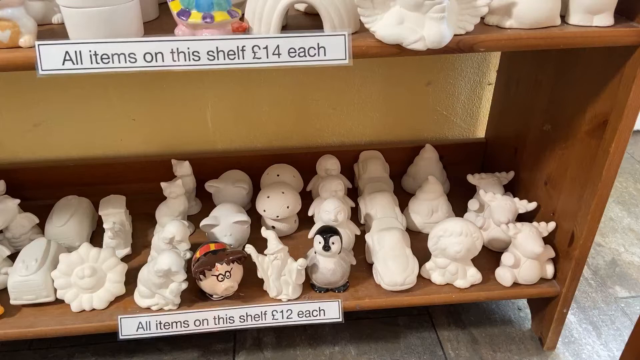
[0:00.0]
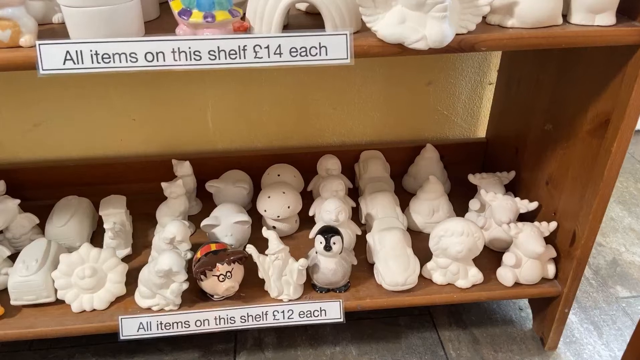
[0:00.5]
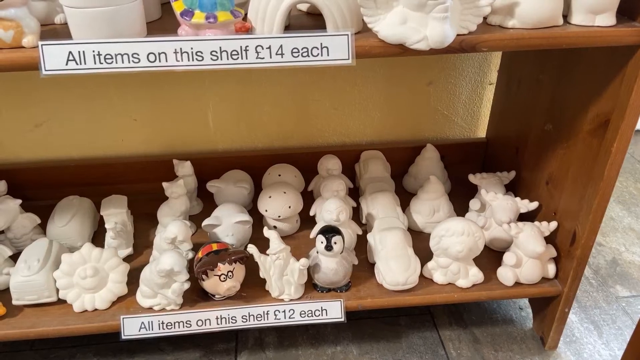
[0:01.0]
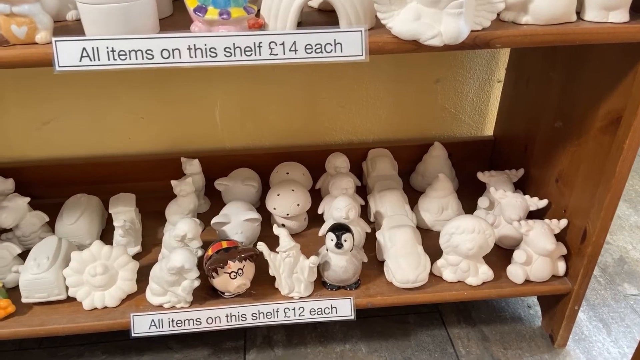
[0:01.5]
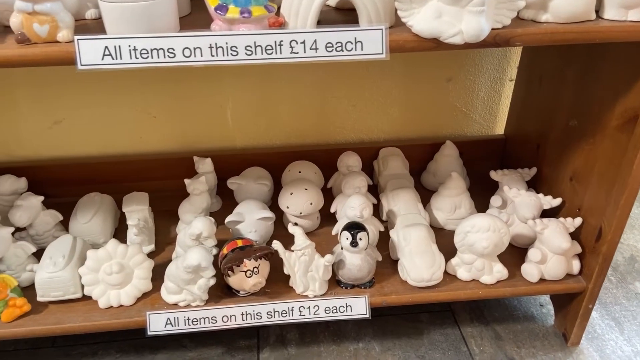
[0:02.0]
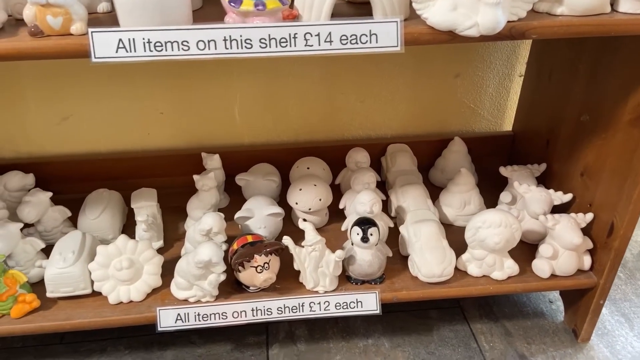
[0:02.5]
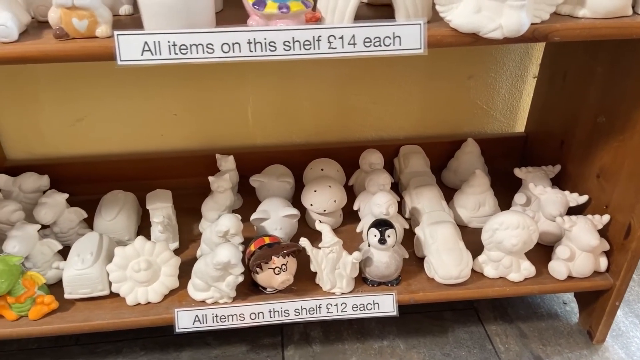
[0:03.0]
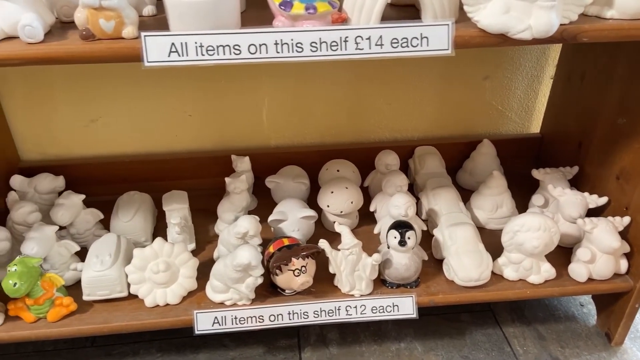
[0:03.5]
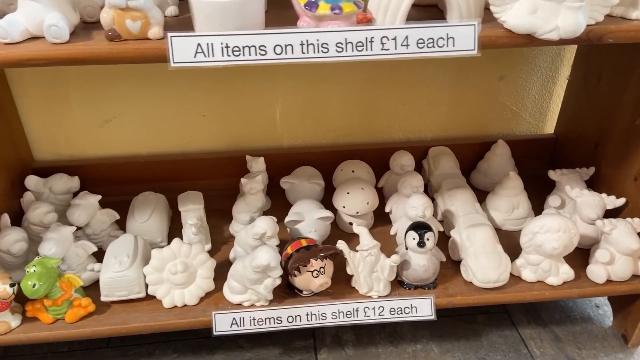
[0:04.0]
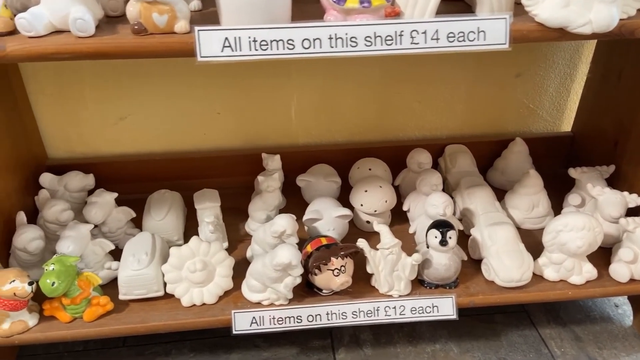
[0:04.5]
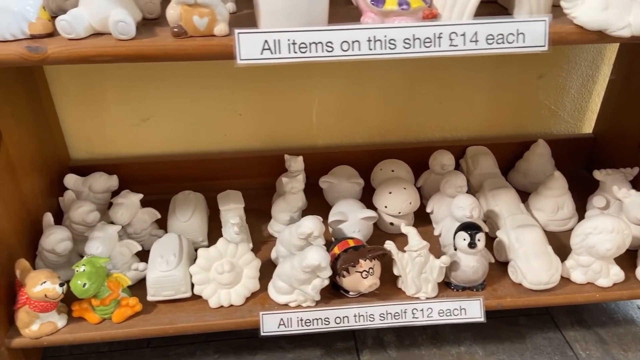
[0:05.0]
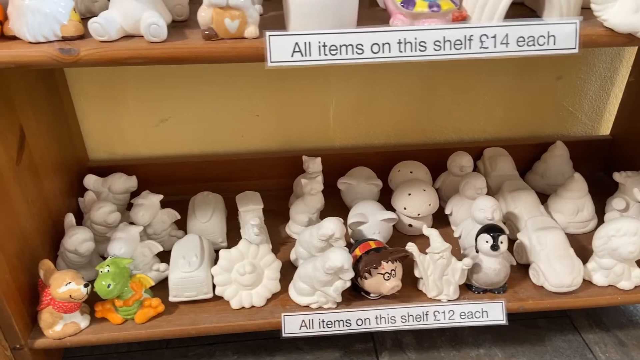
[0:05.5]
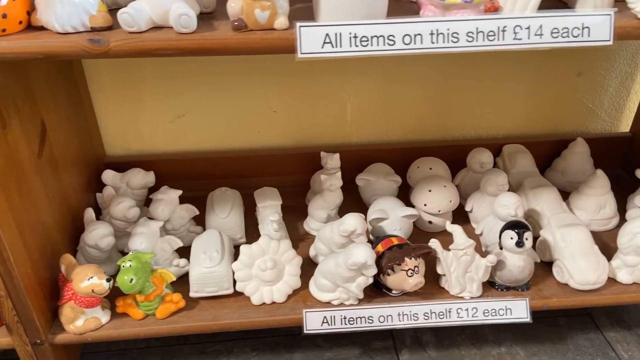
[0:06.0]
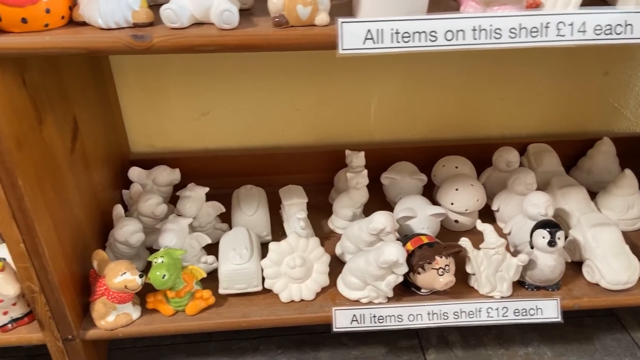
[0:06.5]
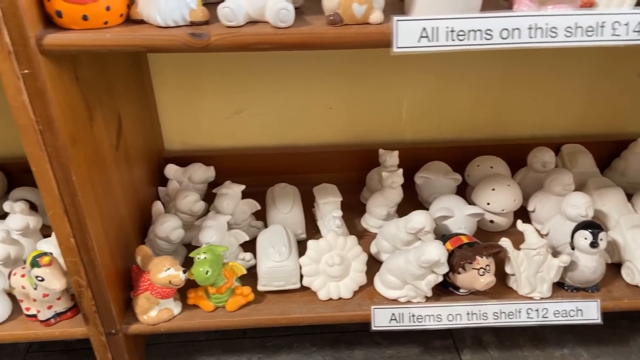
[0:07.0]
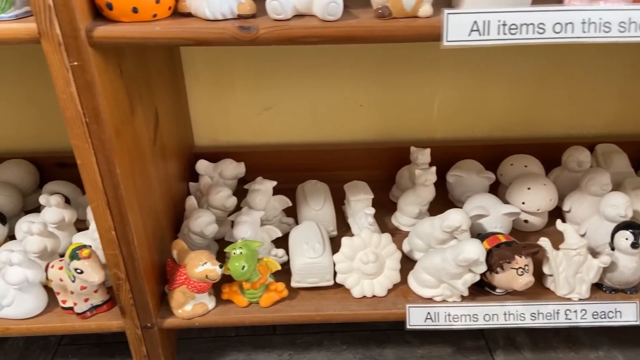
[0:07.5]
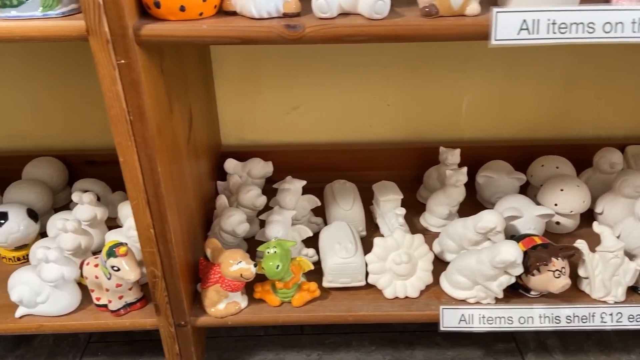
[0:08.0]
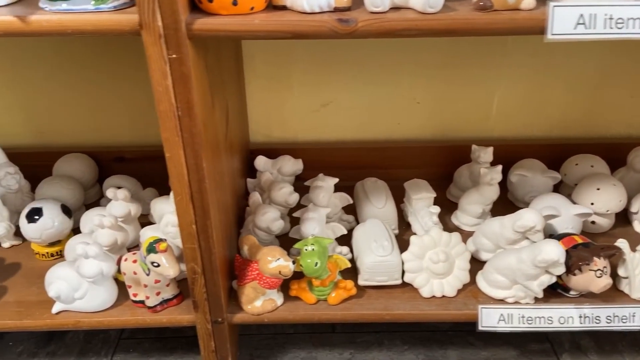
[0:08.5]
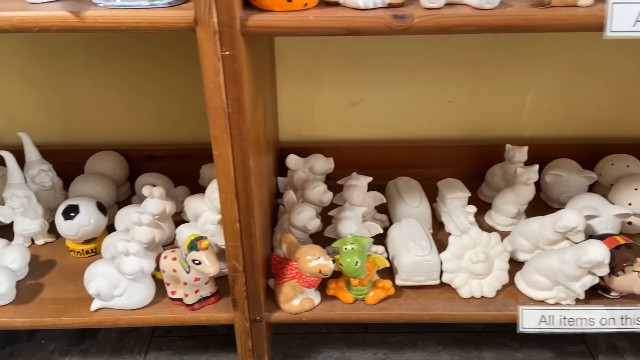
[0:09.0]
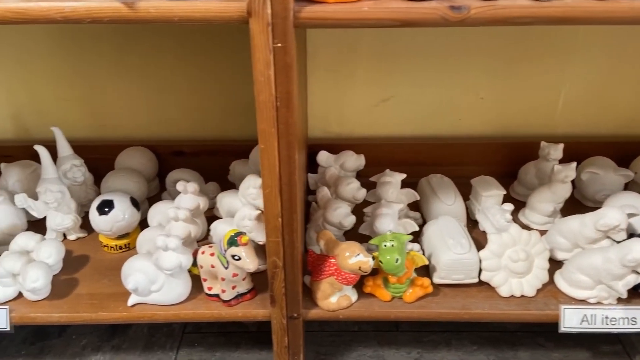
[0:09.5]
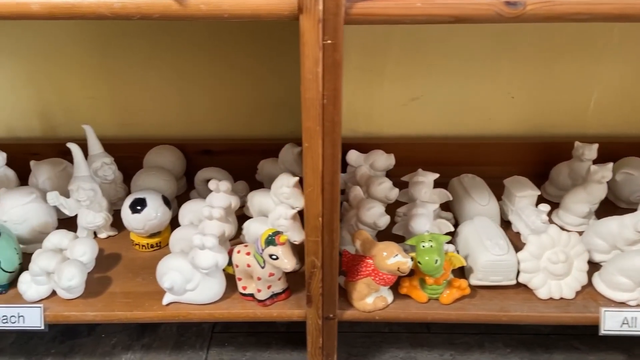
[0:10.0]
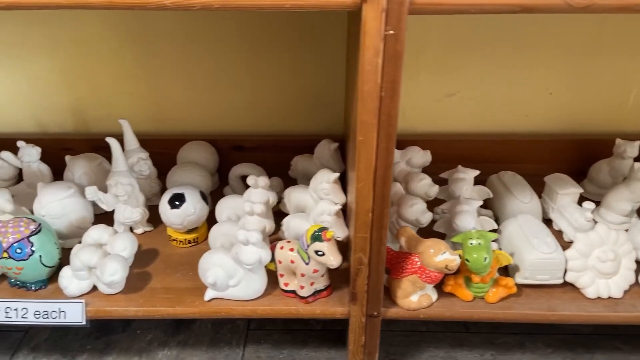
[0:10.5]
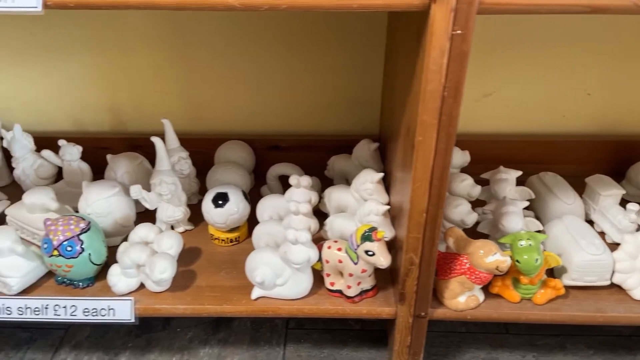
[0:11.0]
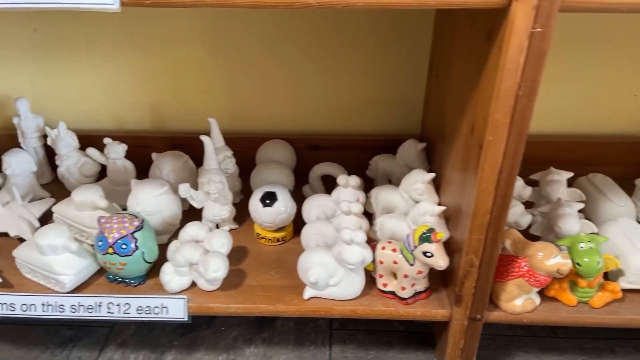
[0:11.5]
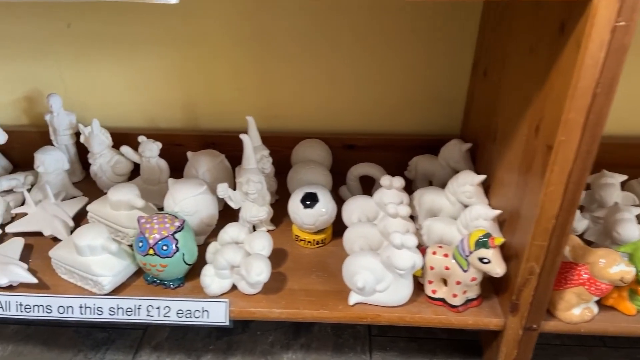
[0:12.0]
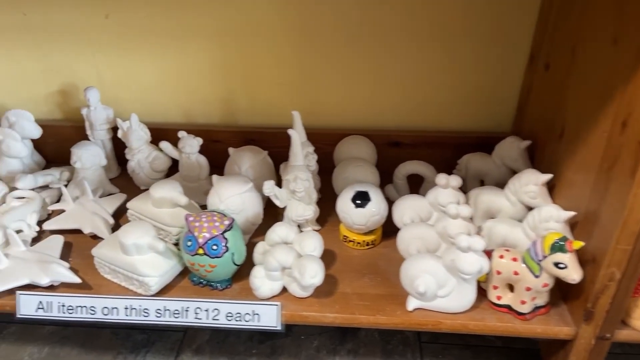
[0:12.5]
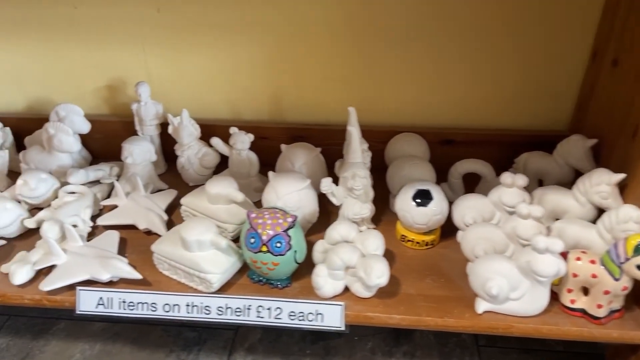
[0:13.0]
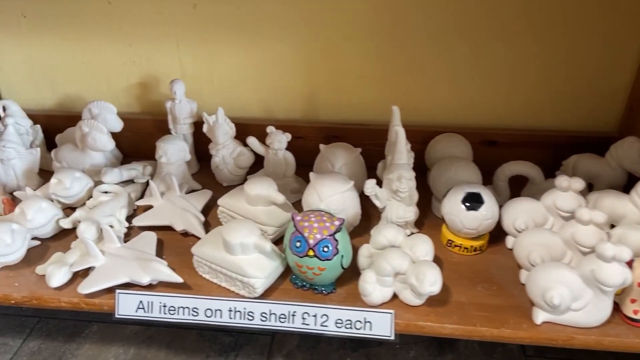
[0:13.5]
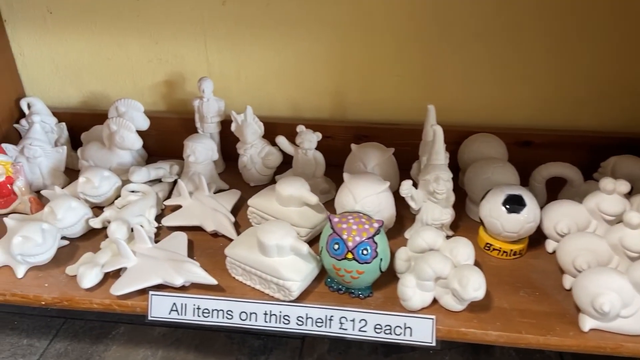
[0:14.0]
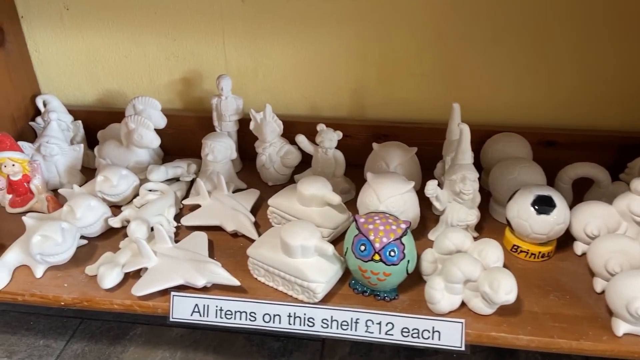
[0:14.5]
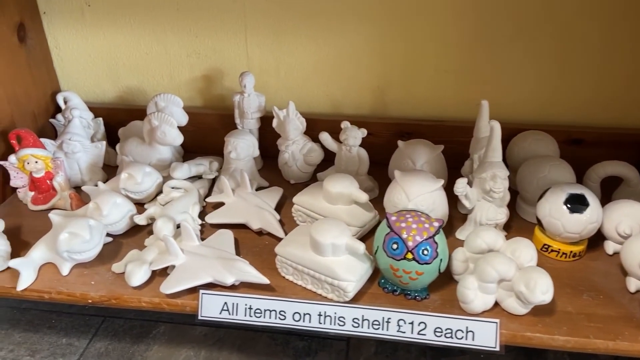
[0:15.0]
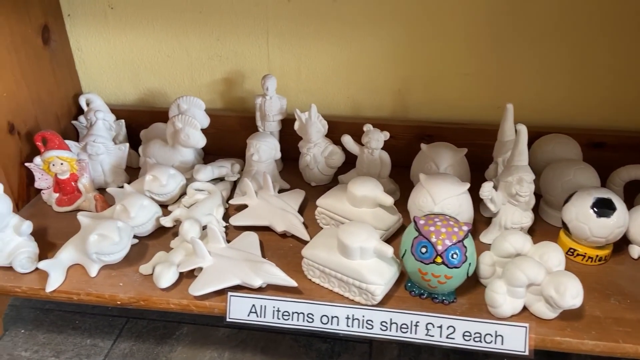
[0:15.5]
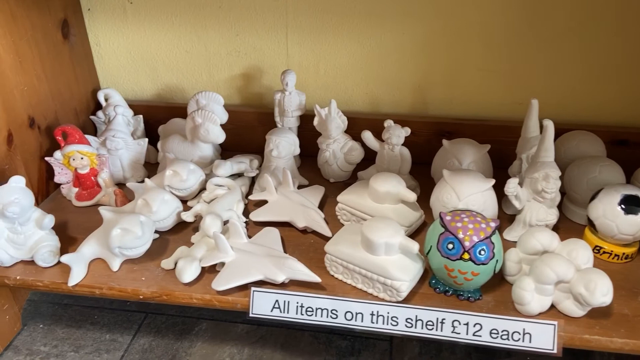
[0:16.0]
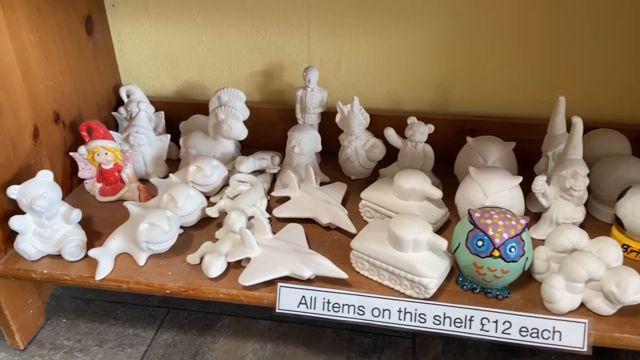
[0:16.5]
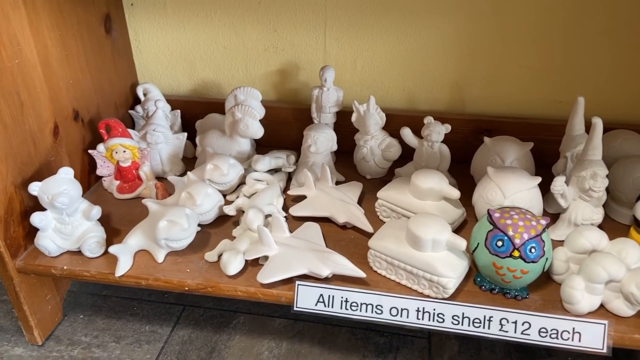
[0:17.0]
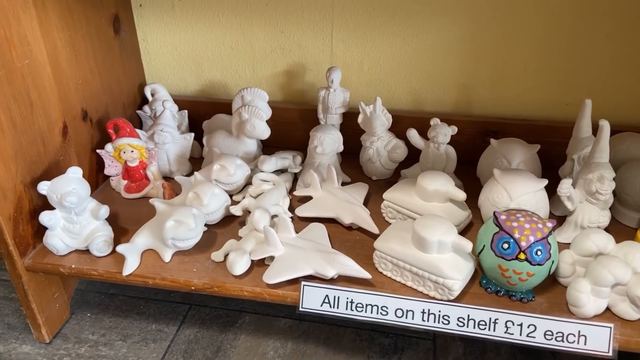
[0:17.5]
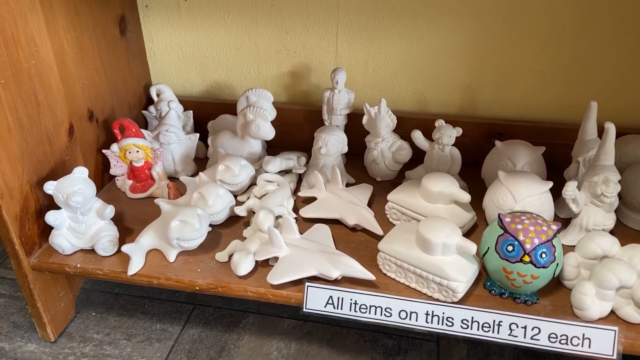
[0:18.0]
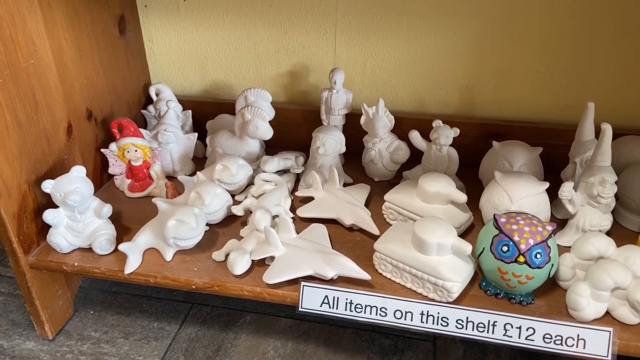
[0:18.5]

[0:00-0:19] A wooden display case has a top, a shelf underneath that, and a bottom shelf. Taped to the top shelf is a piece of white paper with black writing that says "all items on this shelf $14 each"; the shelf holds small white ceramic figures. Underneath is a shelf with another piece of white paper taped to it that reads "all items on this shelf $12 each," holding small ceramic pieces, some shaped like elephants, some like penguins, one like a pig, and a couple like sheep. The view slowly scrolls to the left, showing all of the ceramics in the display case. It then cuts to another part of the display case, where ceramic jets, owls, horses, sharks and bears are visible.